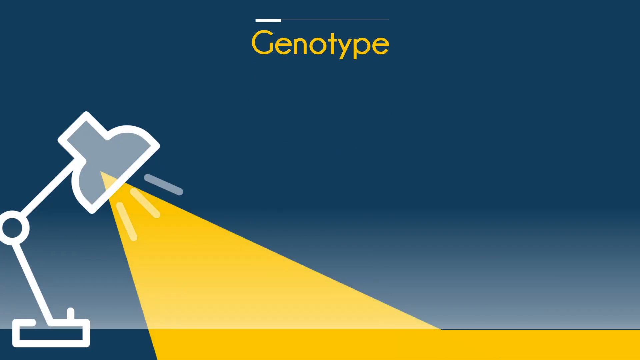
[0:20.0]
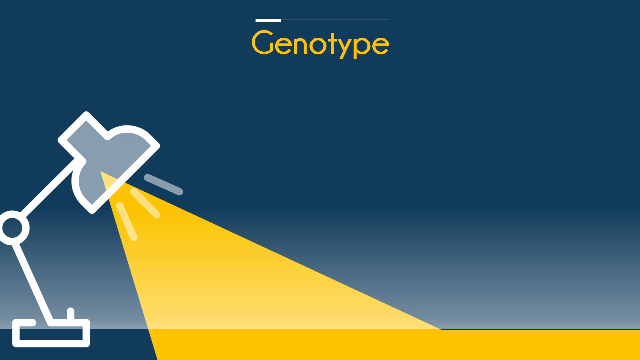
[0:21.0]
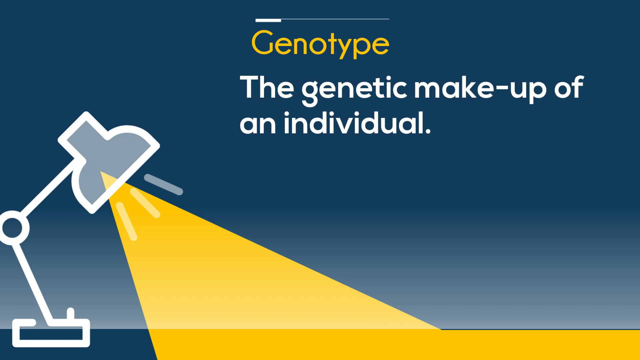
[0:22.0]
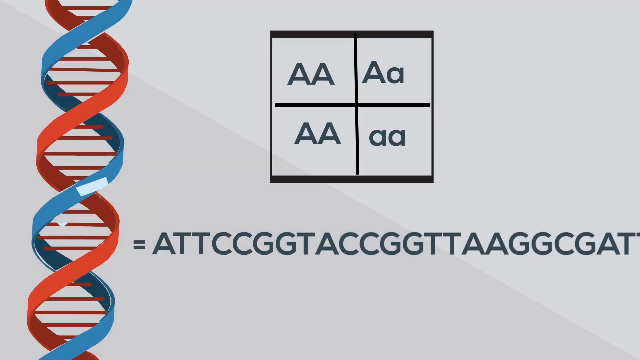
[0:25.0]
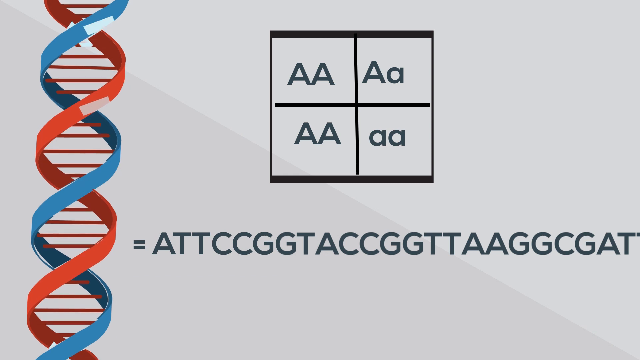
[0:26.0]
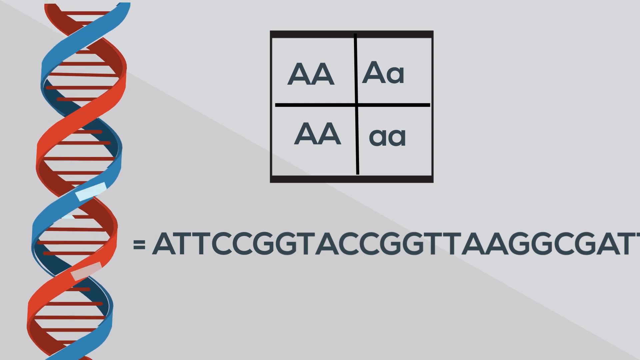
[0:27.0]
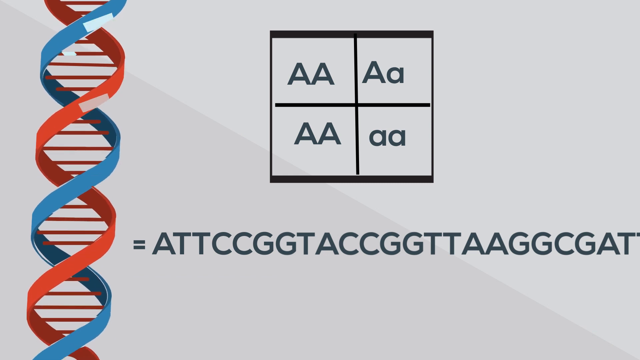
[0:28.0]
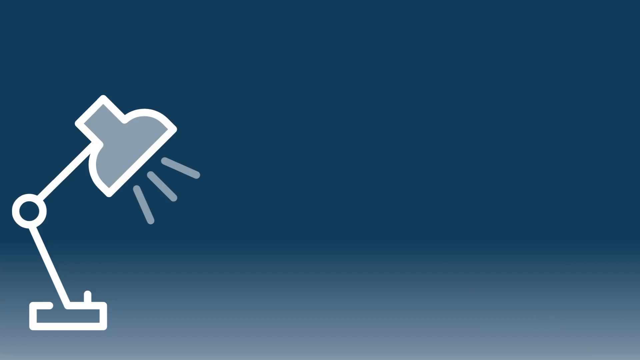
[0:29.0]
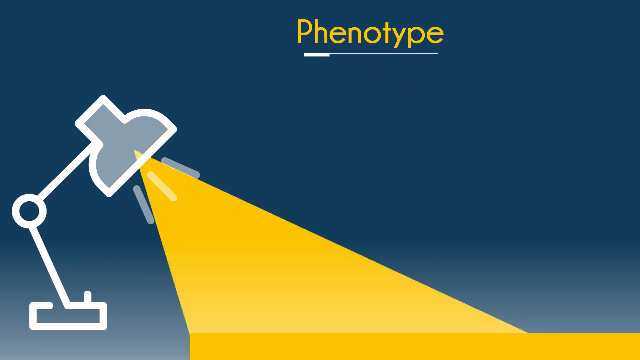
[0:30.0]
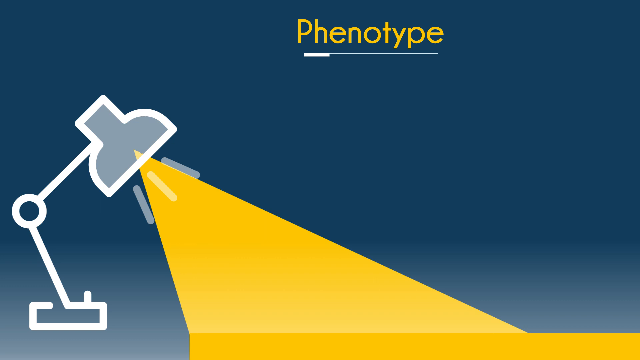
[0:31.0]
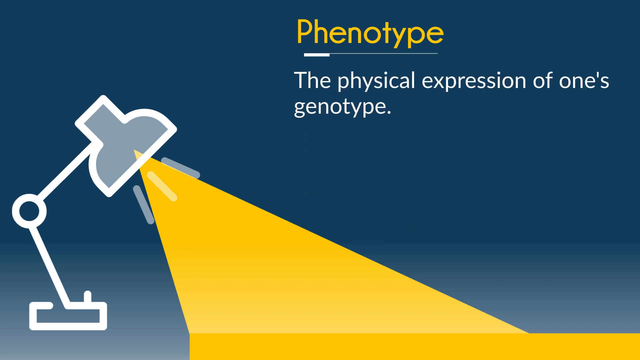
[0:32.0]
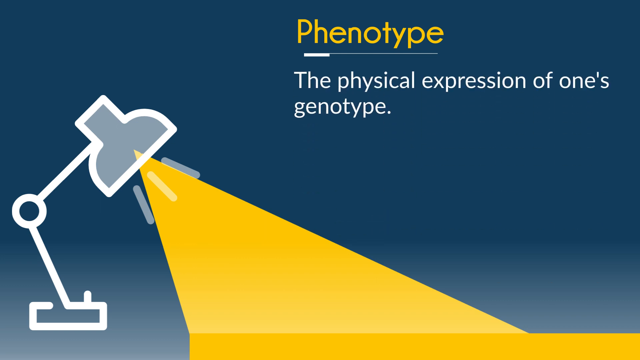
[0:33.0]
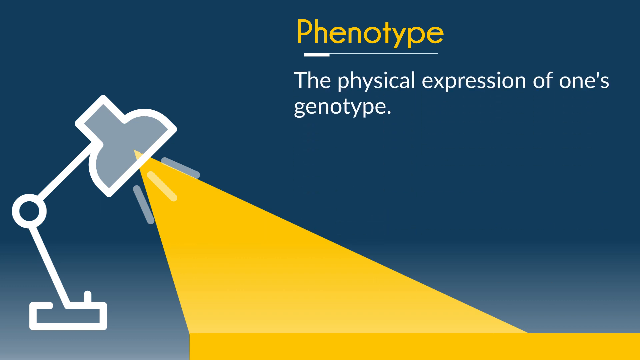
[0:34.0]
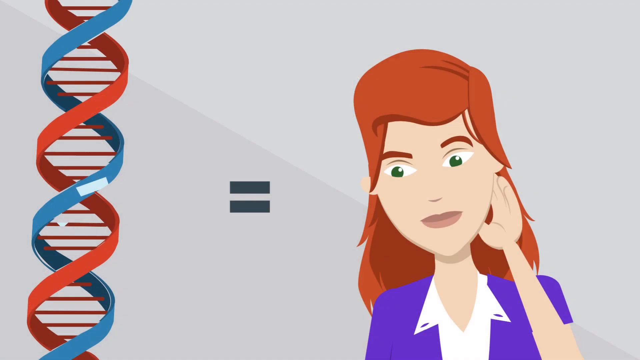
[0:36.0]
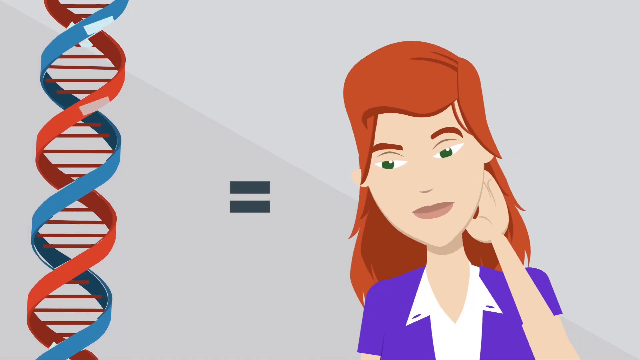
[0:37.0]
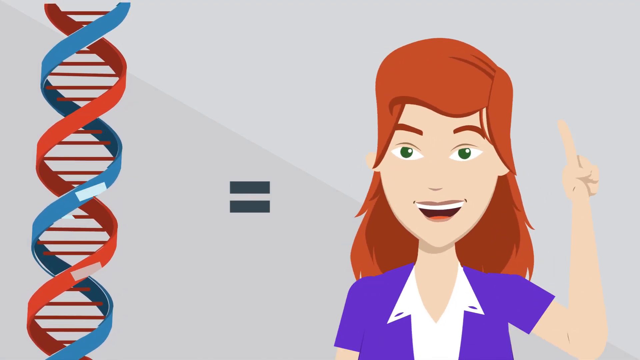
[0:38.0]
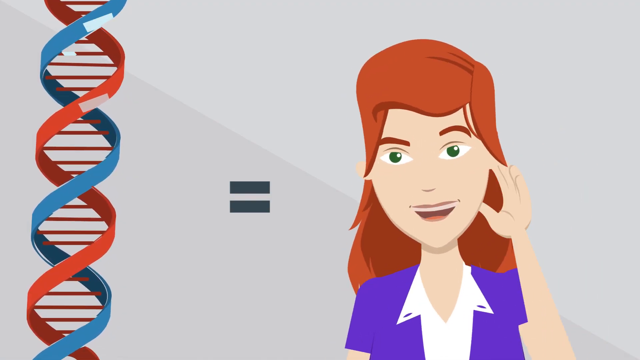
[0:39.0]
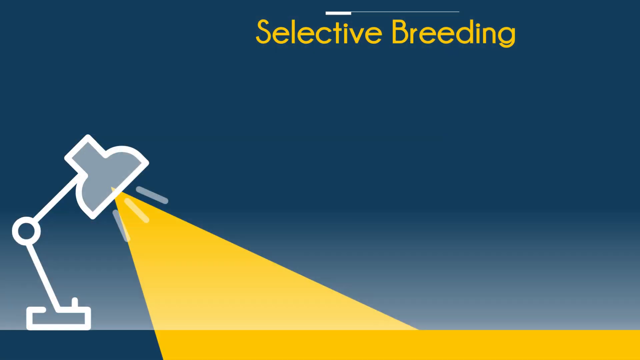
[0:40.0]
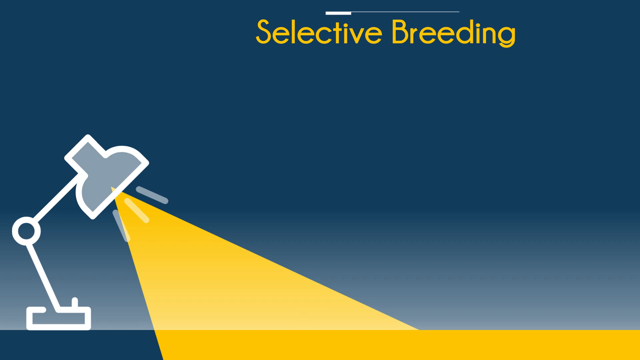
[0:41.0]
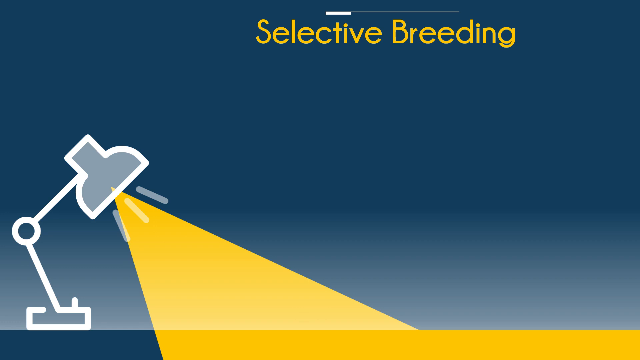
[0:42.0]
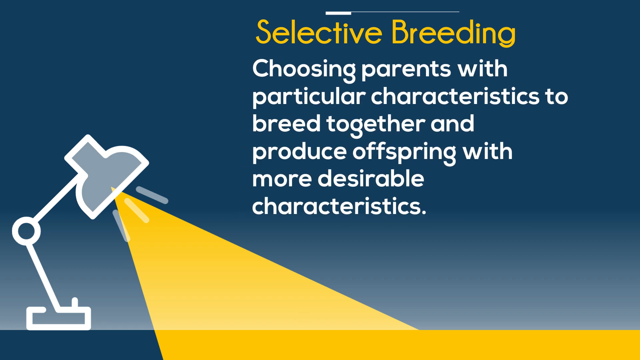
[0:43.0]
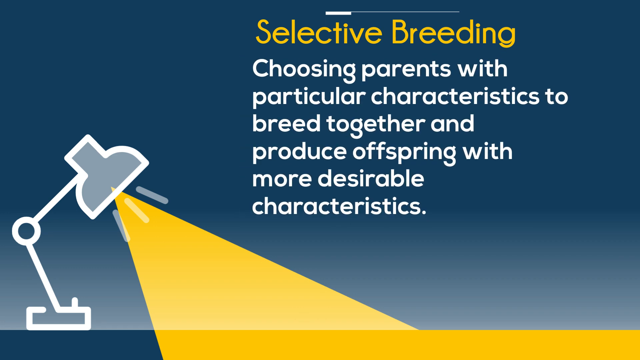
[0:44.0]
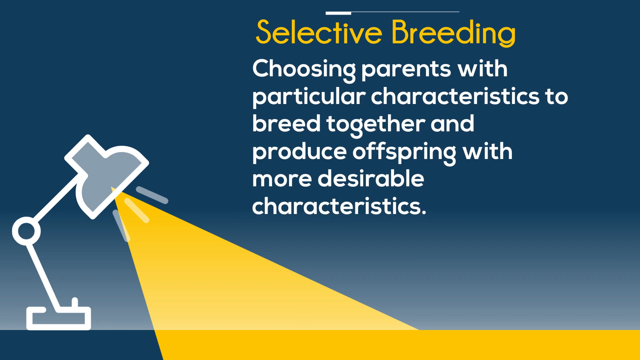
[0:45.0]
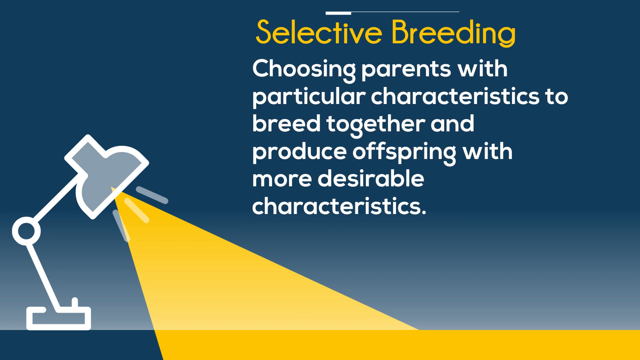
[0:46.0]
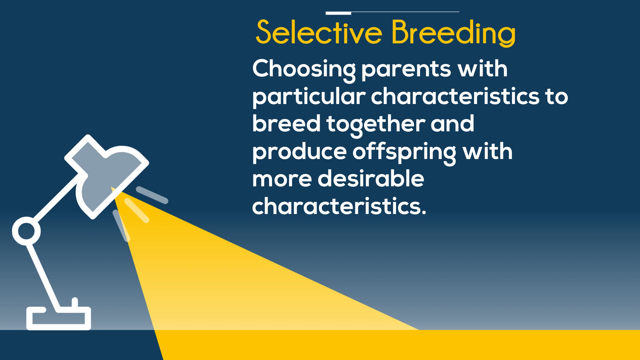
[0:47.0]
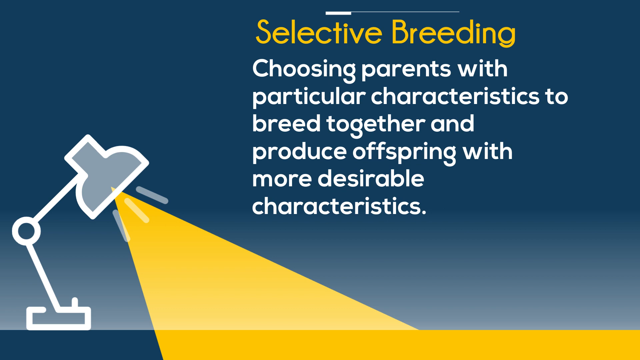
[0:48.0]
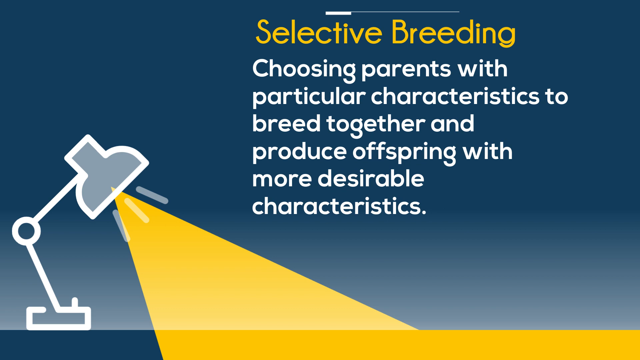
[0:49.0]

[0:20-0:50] Genotype is defined as the genetic makeup of an individual, and two types of DNA are shown with the letters AA. Phenotype is defined as the physical expression of one's genotype. The third term is selective breeding, defined as choosing parents with particular characteristics to breed together and produce offspring with more desirable characteristics.